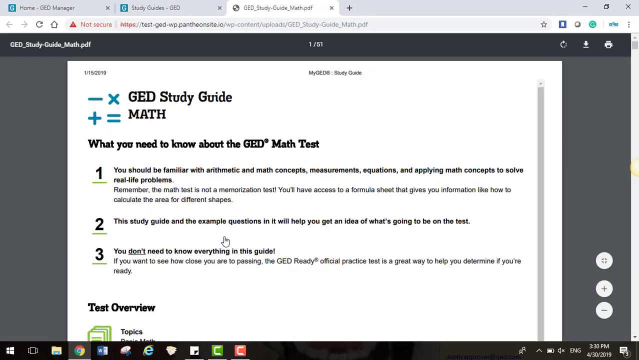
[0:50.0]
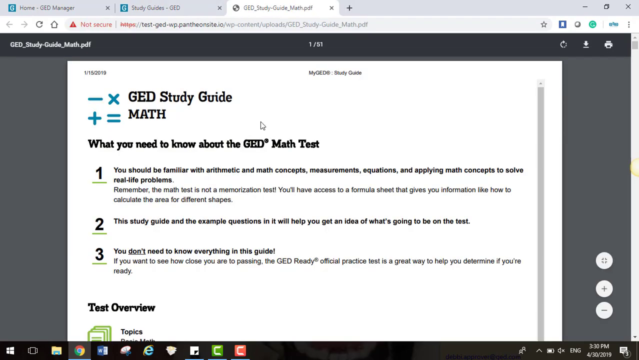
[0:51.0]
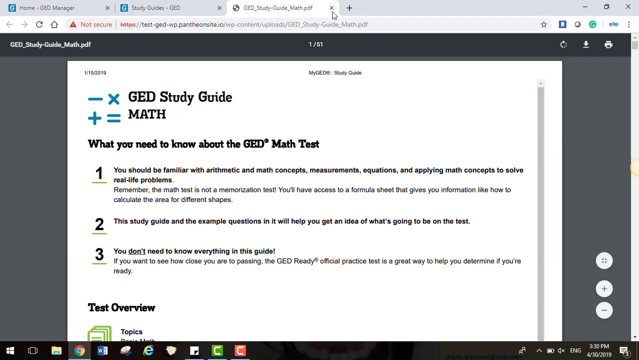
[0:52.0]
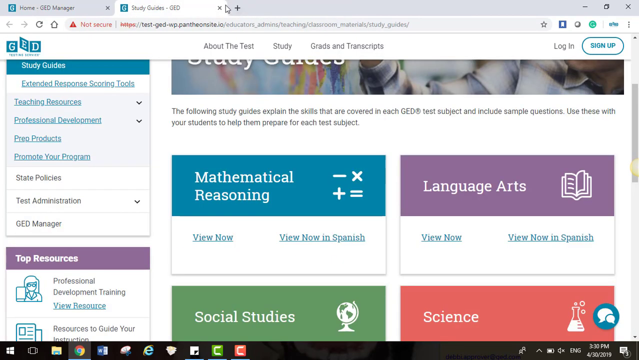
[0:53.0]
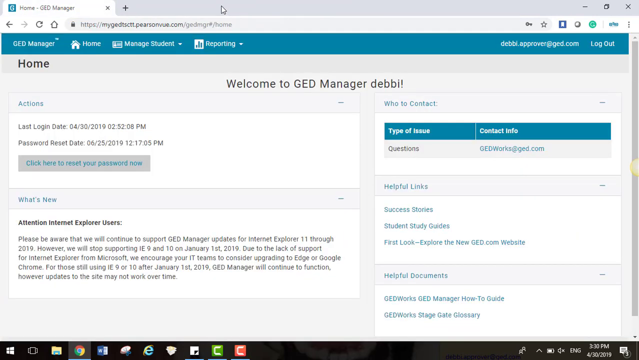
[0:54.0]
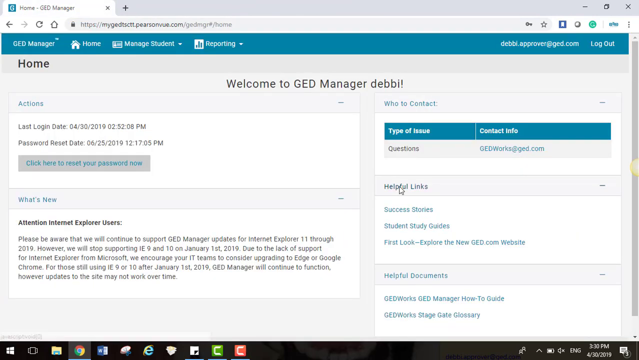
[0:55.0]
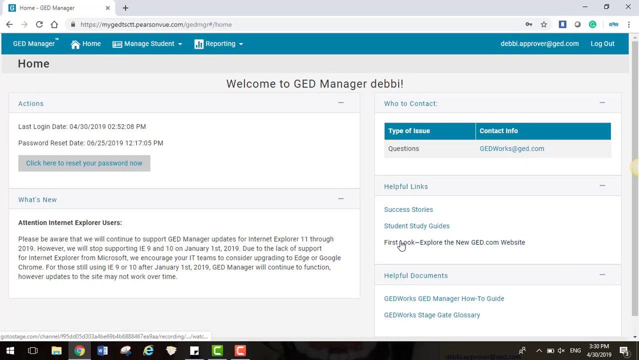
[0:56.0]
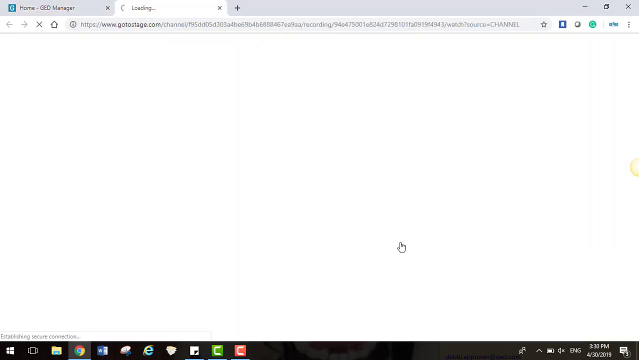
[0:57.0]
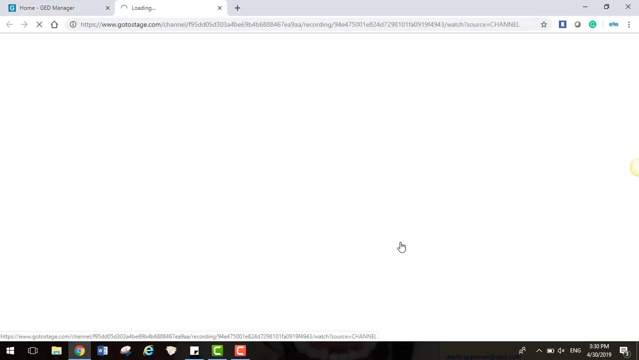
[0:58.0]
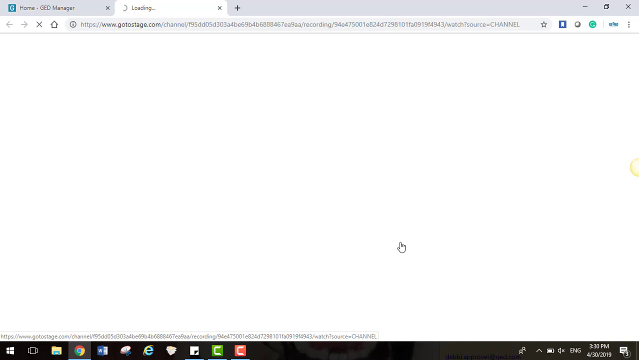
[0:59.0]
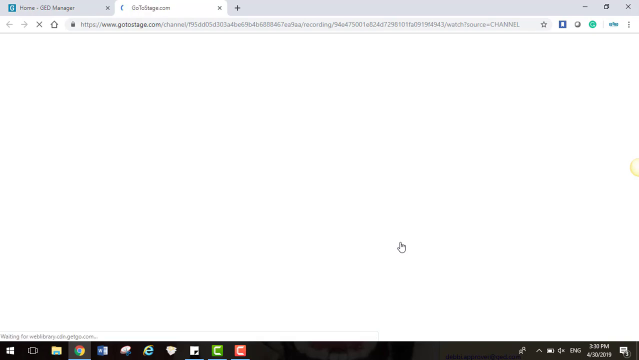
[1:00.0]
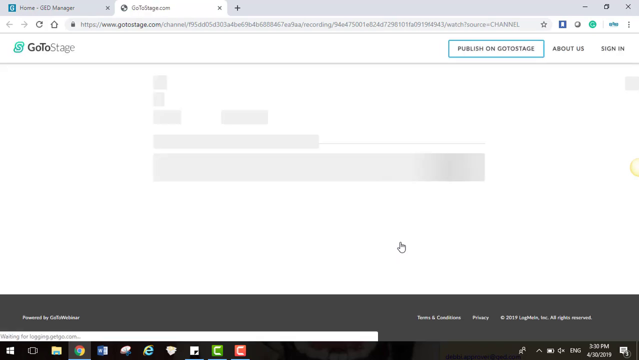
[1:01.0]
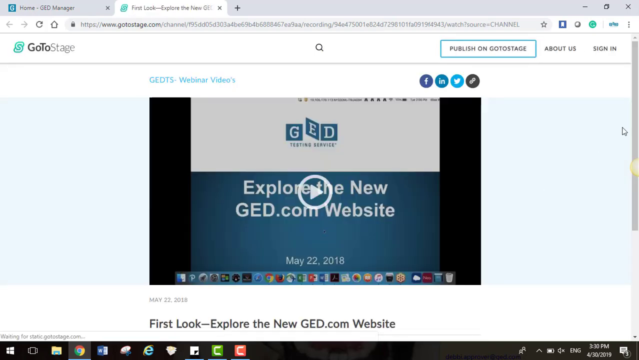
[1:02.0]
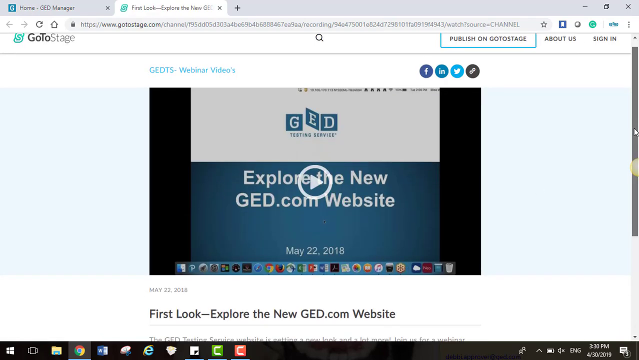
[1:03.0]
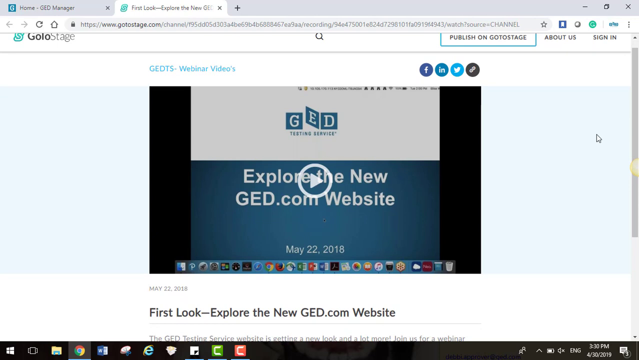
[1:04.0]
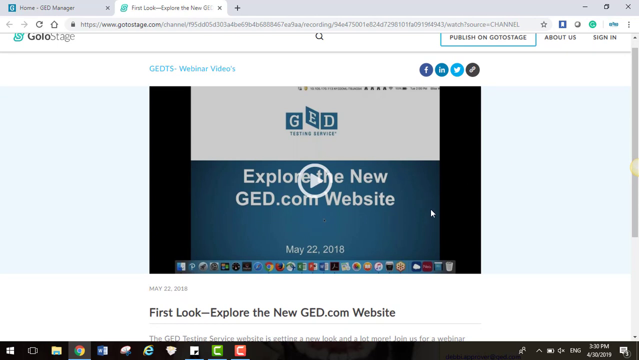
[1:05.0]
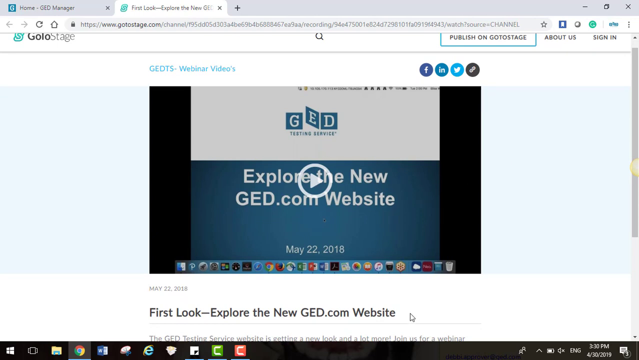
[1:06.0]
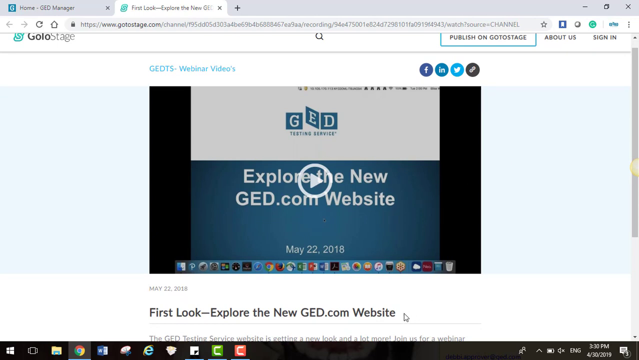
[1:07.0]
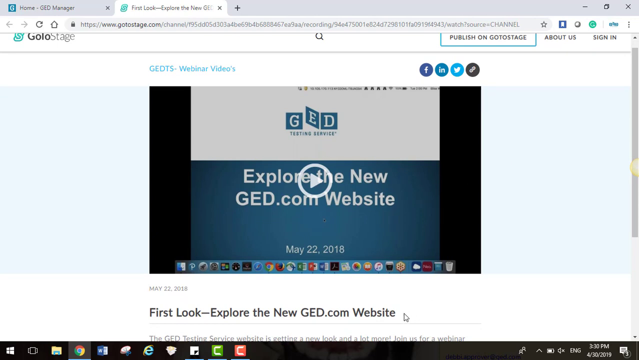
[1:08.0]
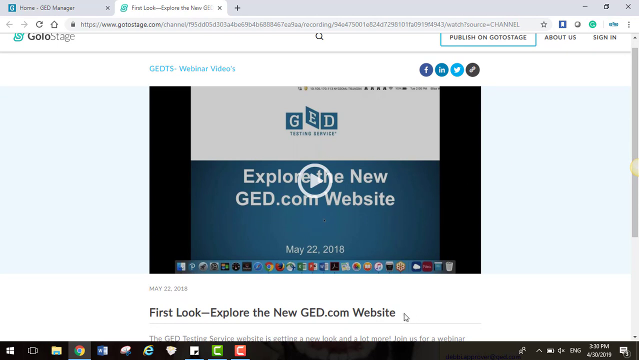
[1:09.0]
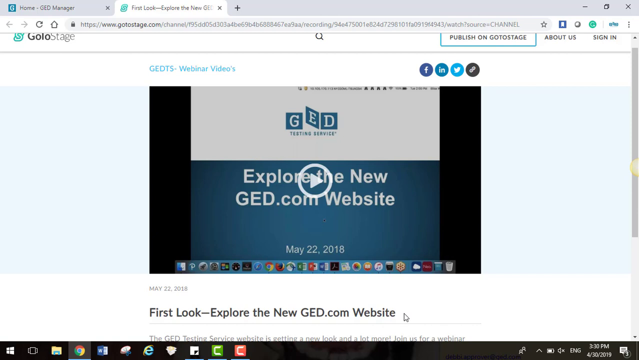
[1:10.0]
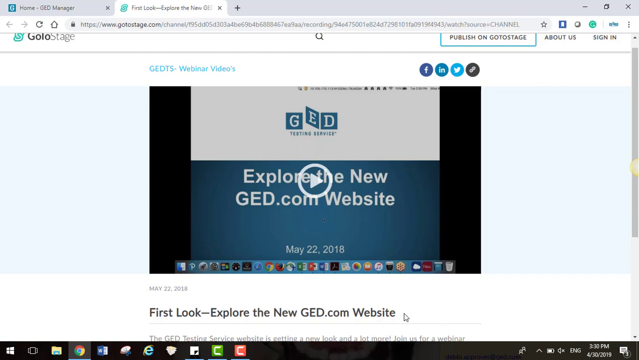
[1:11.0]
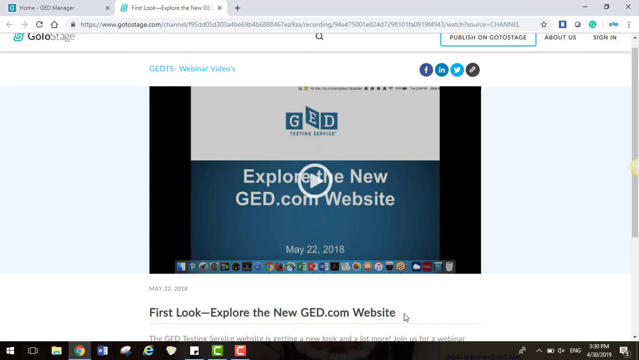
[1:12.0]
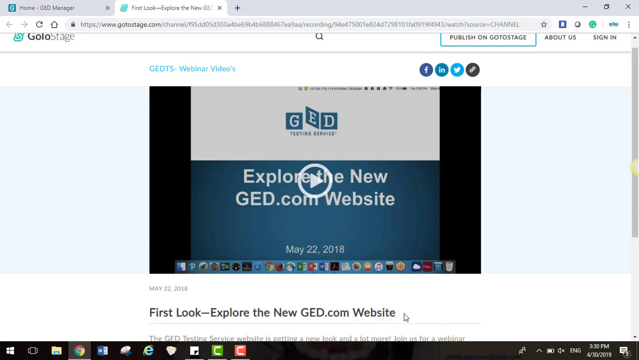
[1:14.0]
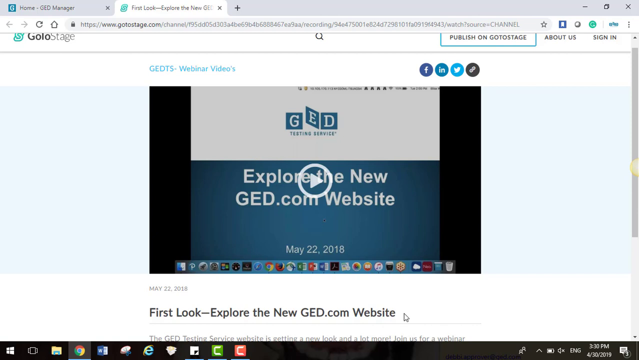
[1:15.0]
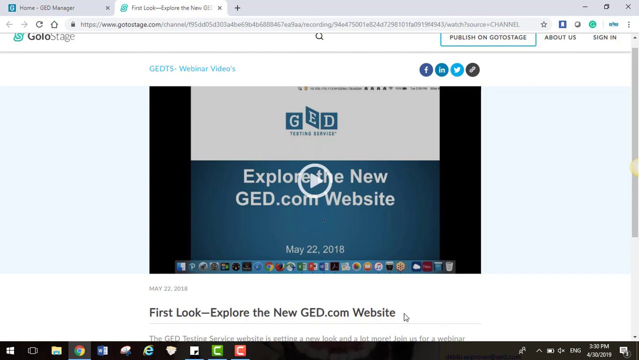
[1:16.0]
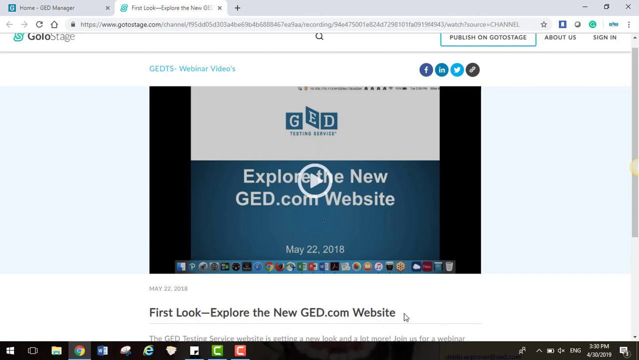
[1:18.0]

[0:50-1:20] An internet browser is open with three tabs, and the third tab is selected, showing a PDF document called GED study guide, a study guide for maths. The user quickly goes up to the tab and clicks the x to close it, leaving two tabs, then clicks the x on the second tab to close it too. A single tab remains open, showing a home page for a GED manager. The user navigates to the helpful links section in the right middle of the page and selects the third hyperlink down, called "first look explore the new ged.com website". Clicking it opens a new tab called Go To Stage, with an embedded video on the page. The user appears to be looking at this page without moving it up or down.